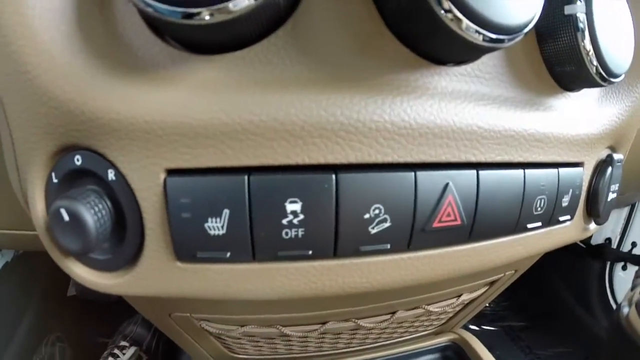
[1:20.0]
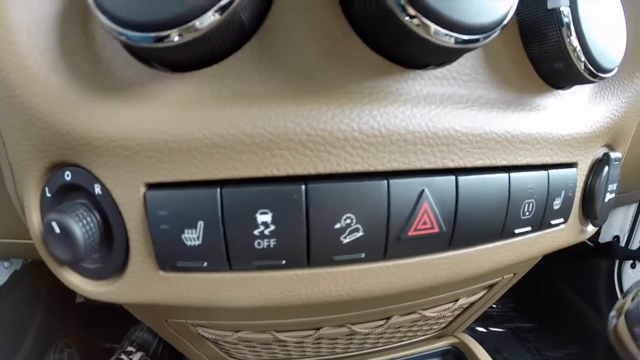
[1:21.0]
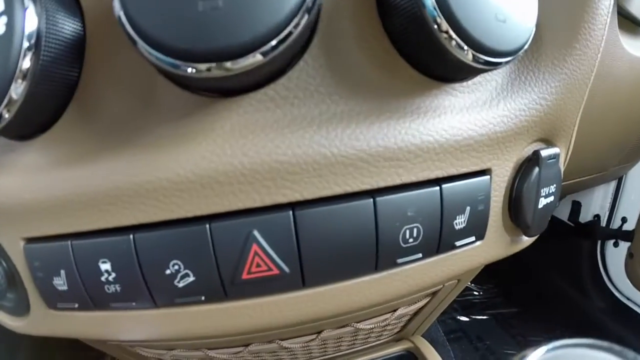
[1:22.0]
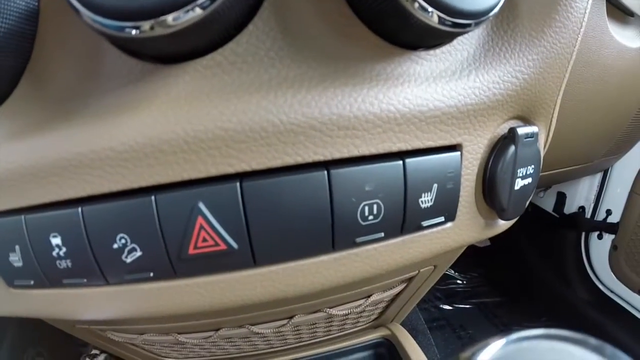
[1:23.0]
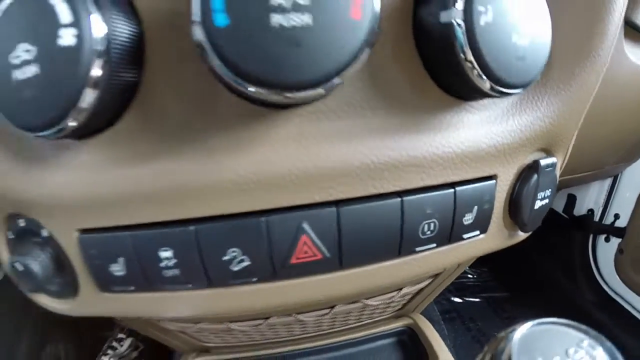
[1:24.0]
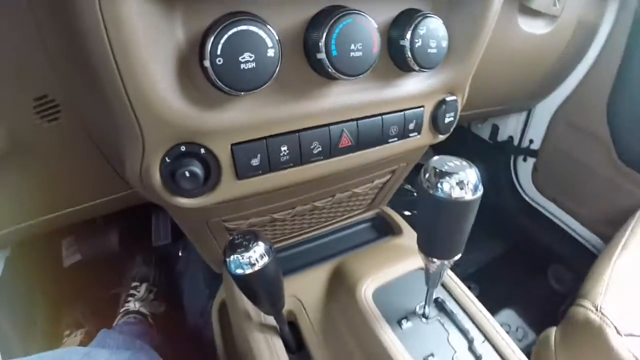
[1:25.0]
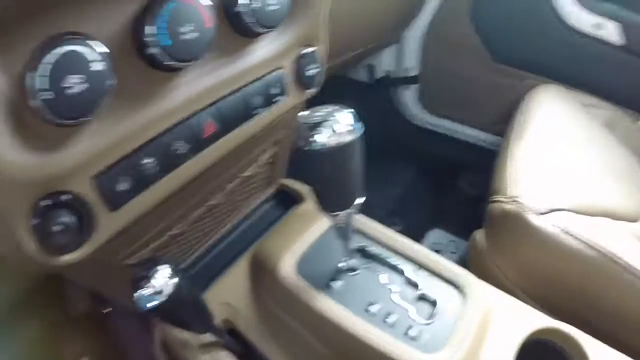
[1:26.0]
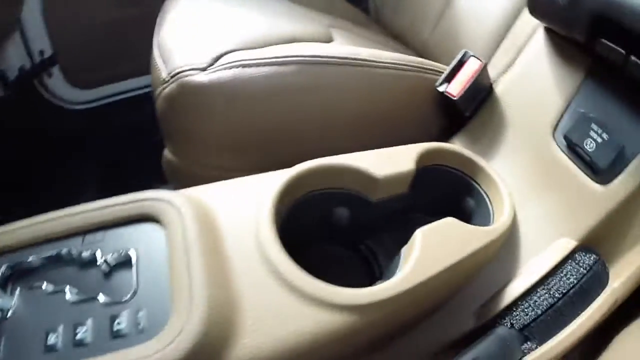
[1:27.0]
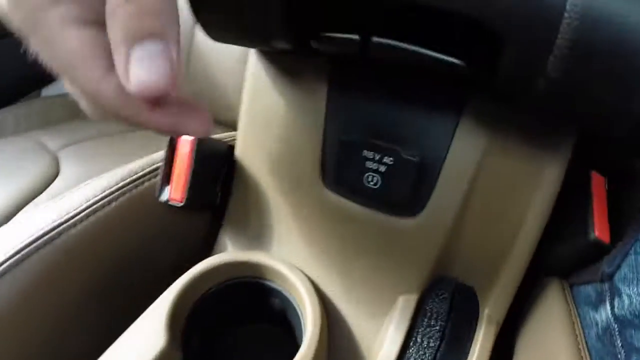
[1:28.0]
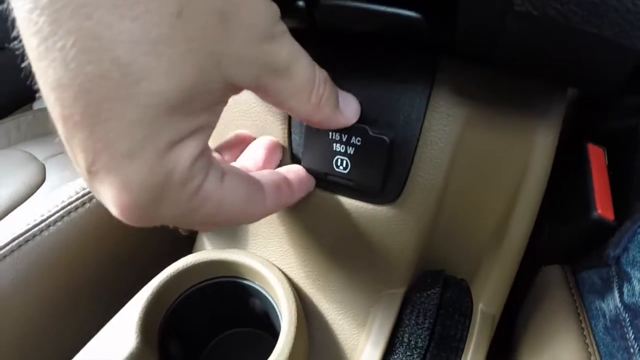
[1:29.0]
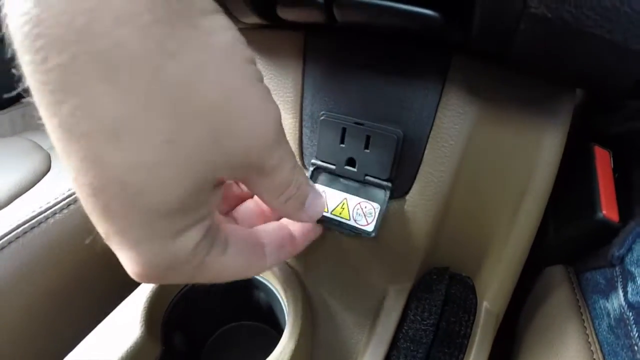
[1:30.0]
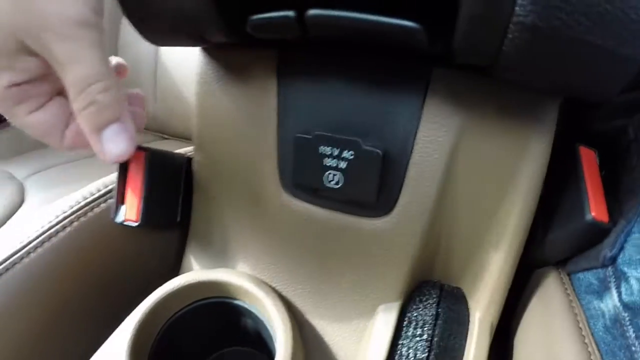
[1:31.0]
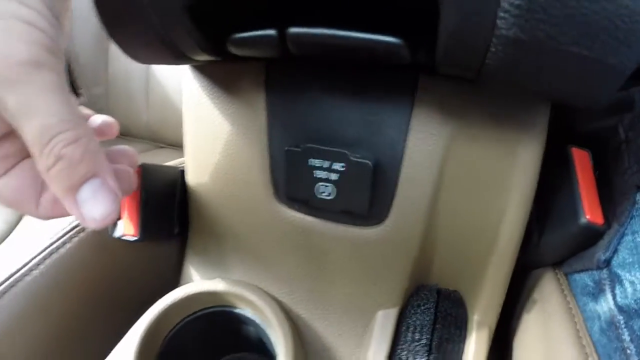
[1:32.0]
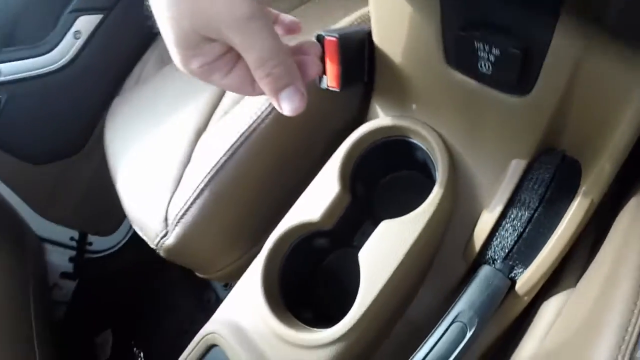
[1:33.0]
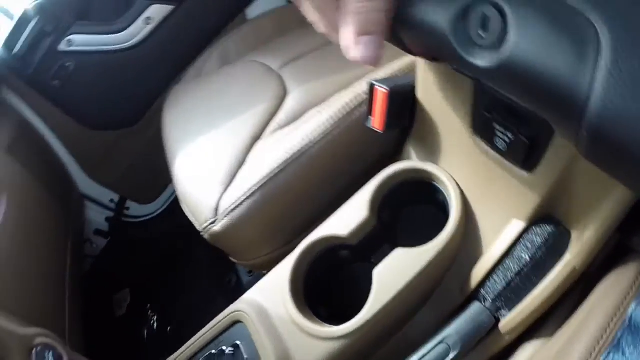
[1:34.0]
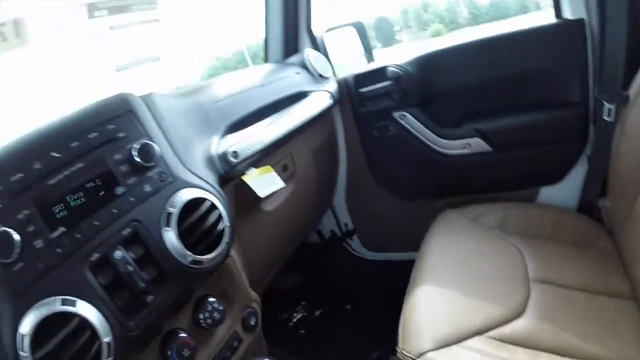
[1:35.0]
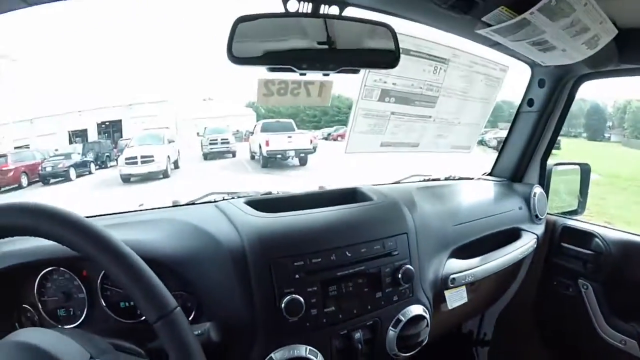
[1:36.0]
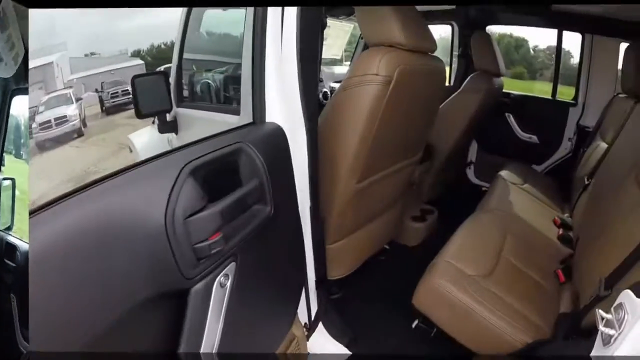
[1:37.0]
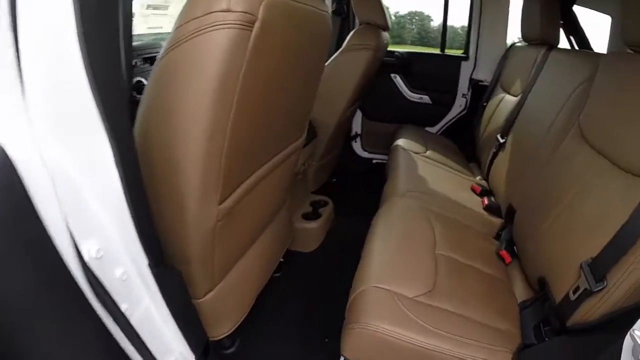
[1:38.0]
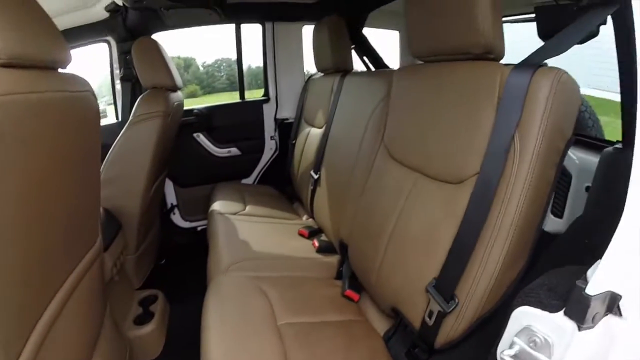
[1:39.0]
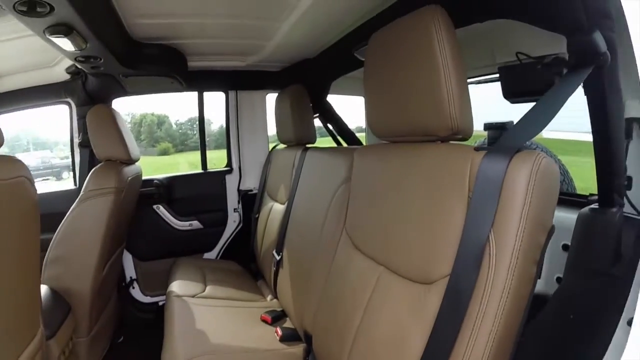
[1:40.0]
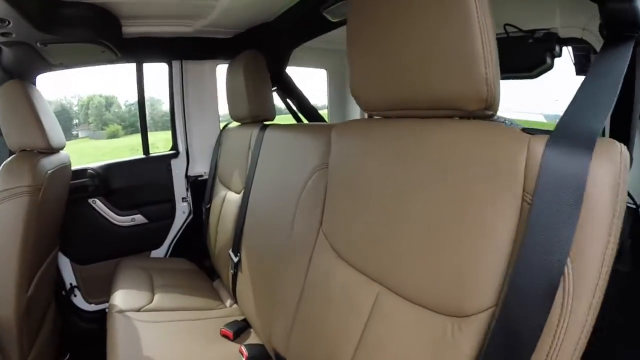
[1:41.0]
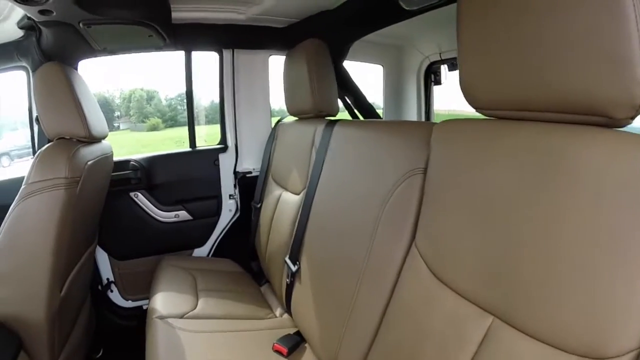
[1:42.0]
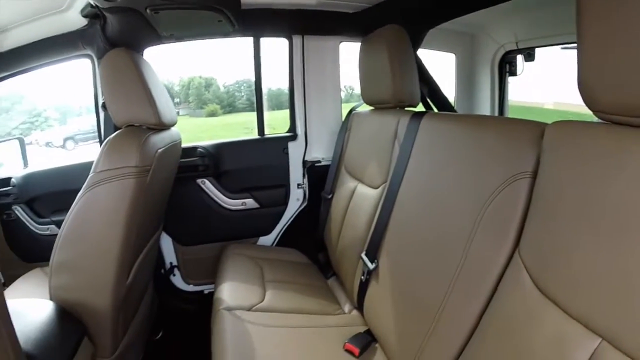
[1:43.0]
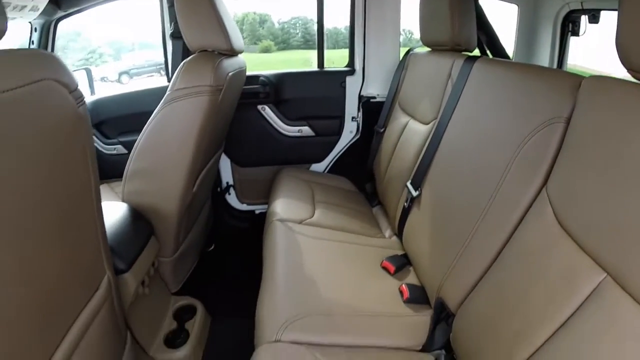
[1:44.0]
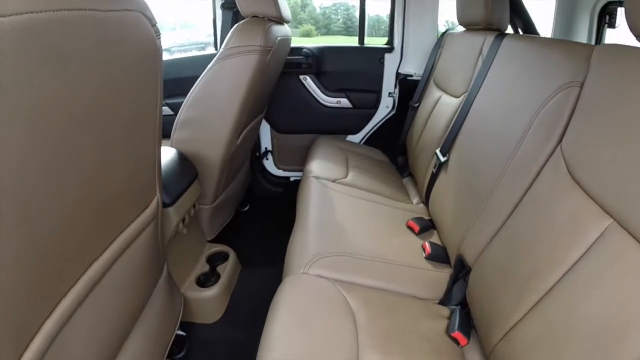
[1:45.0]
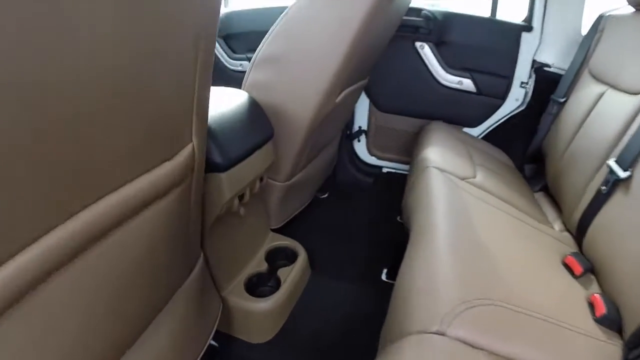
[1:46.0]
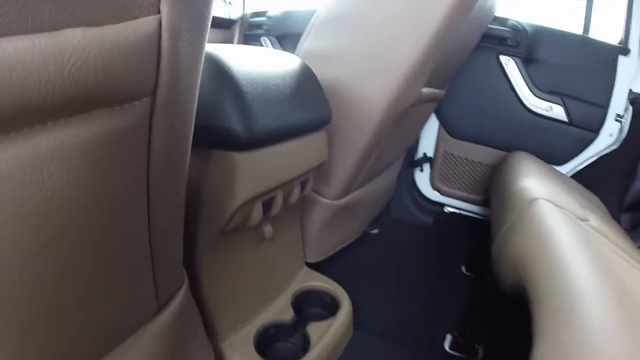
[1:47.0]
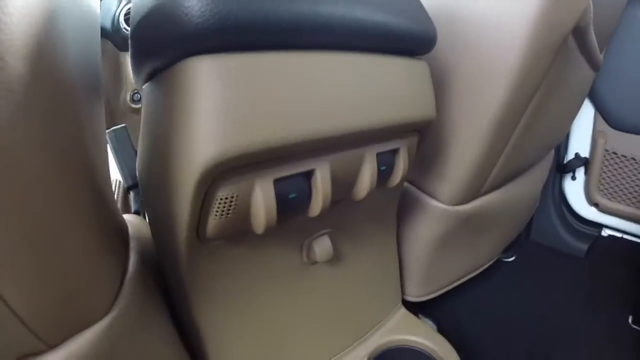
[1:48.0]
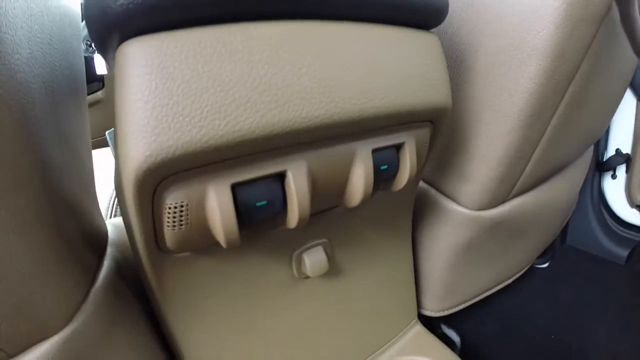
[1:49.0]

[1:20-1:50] Buttons inside the vehicle are shown. In the middle is a hazard button marked with a red triangle, another red triangle, and a black triangle. Knobs are above it. To the side is a seat button that might be for vibration, then a button with something like a curvy road that says "off," a defrost button, and a couple more. There is something like a cigarette lighter. A person opens up a compartment to show an outlet between the seats. Then the rear passenger door on the driver's side is opened, showing that the back seats are also beige leather.